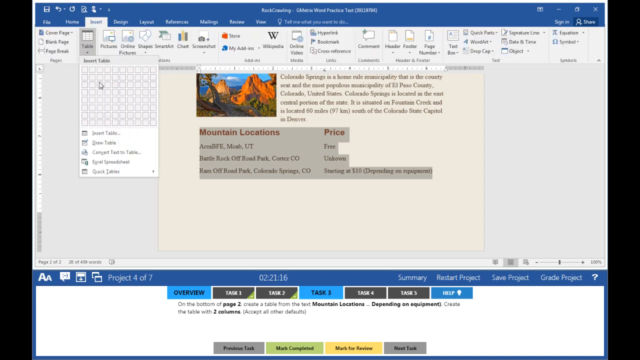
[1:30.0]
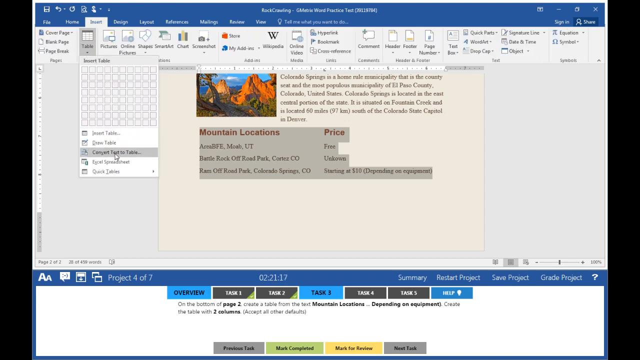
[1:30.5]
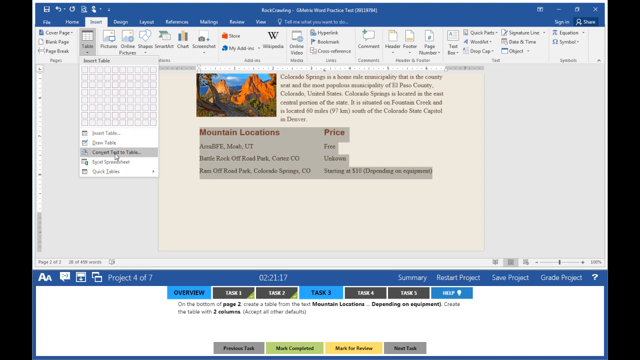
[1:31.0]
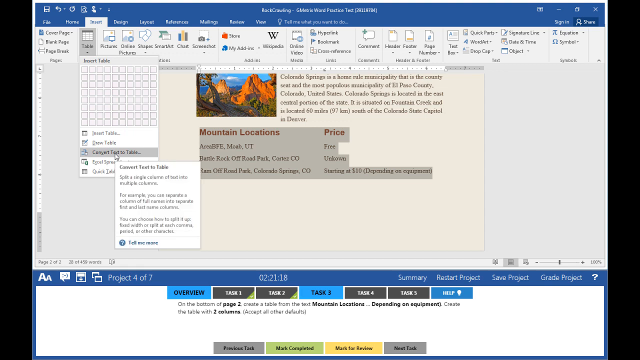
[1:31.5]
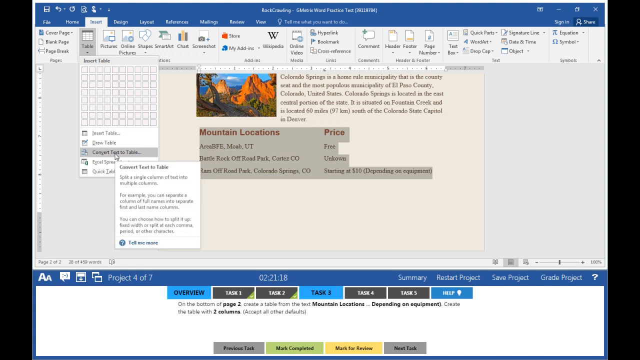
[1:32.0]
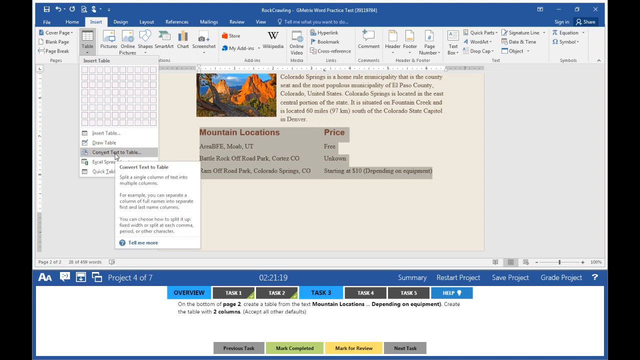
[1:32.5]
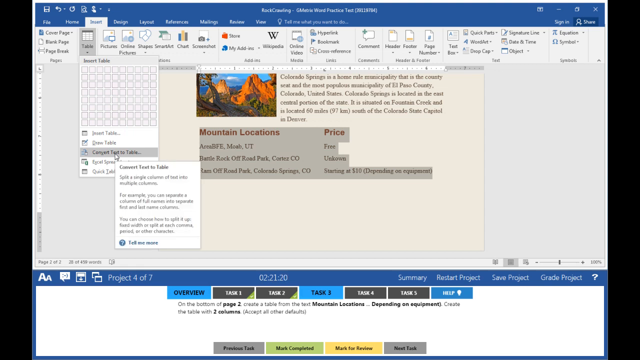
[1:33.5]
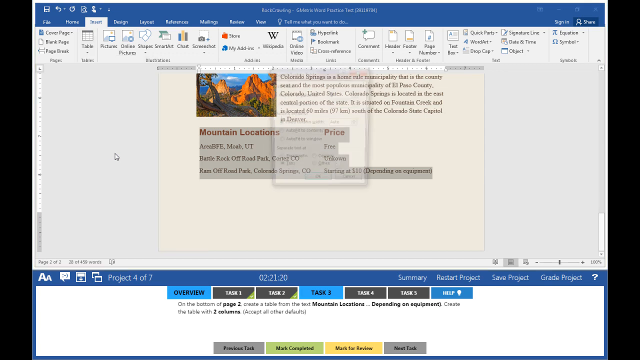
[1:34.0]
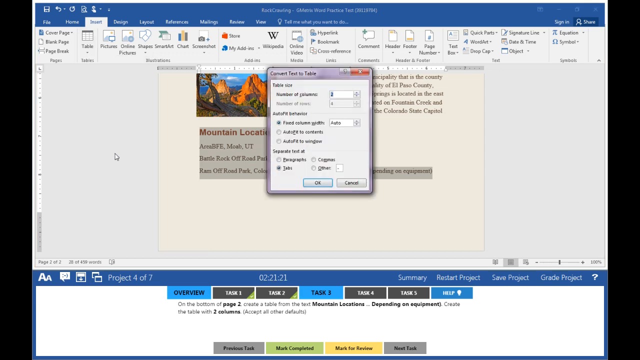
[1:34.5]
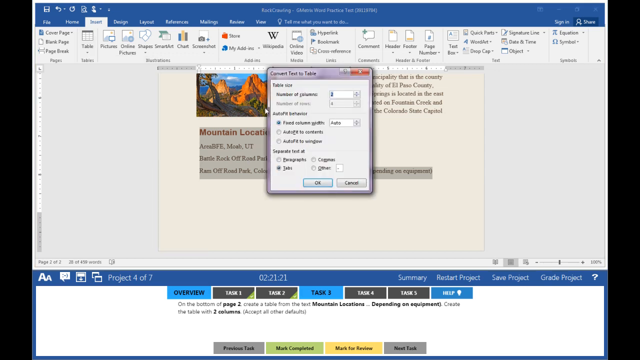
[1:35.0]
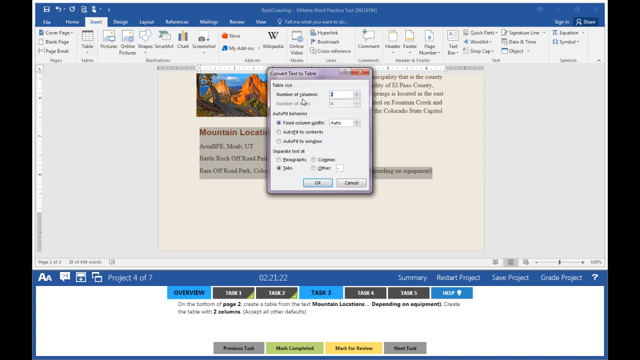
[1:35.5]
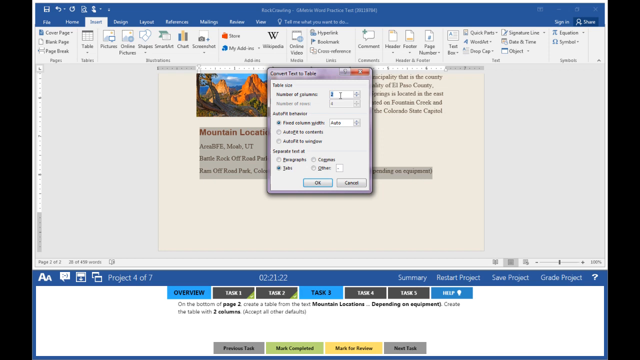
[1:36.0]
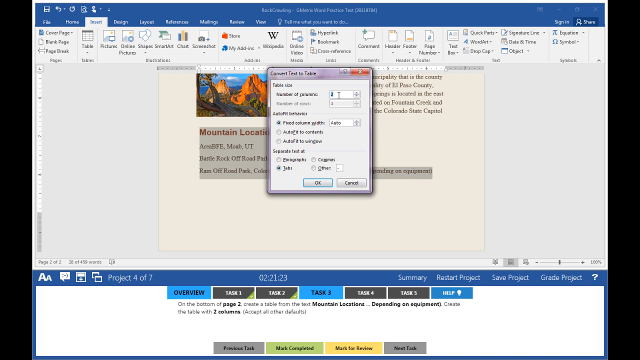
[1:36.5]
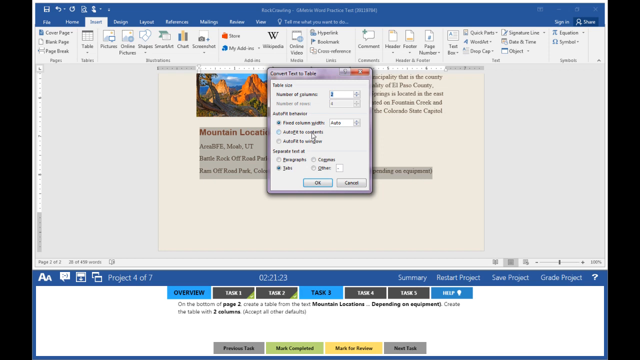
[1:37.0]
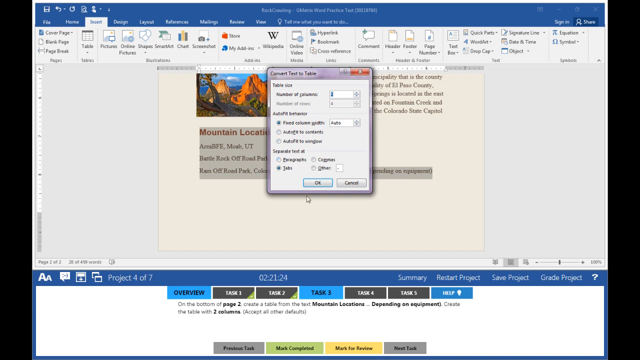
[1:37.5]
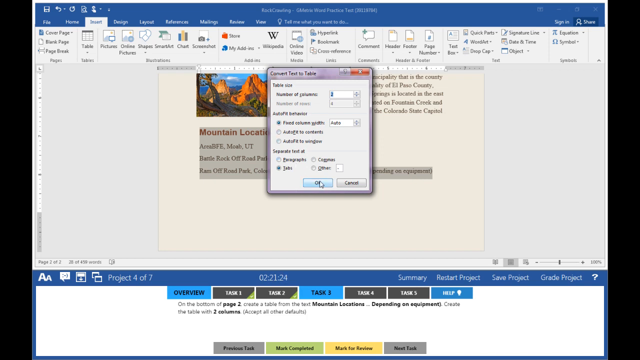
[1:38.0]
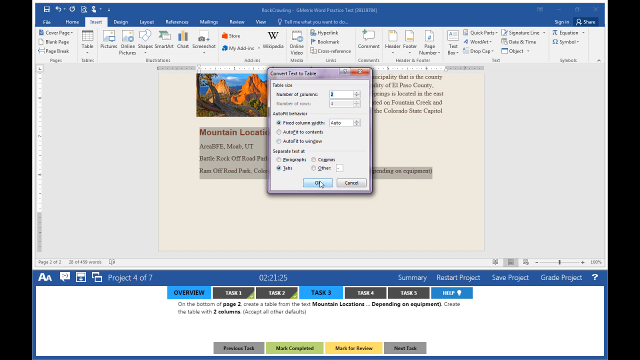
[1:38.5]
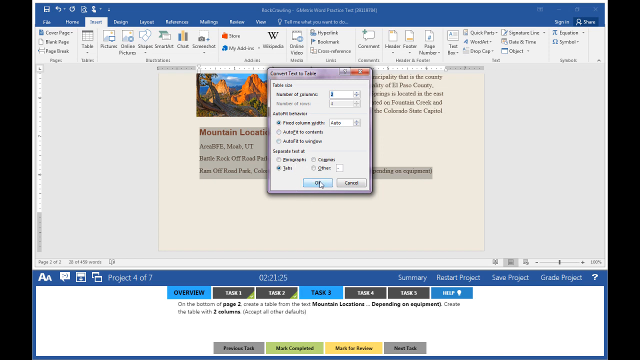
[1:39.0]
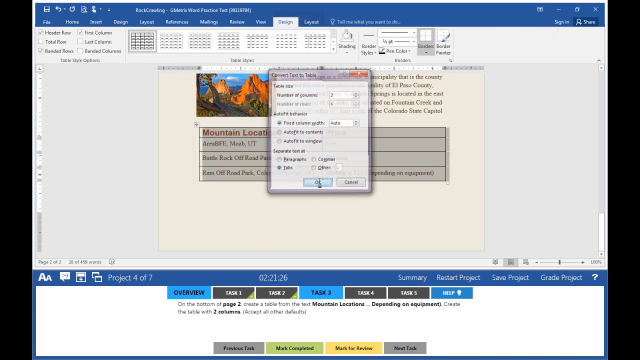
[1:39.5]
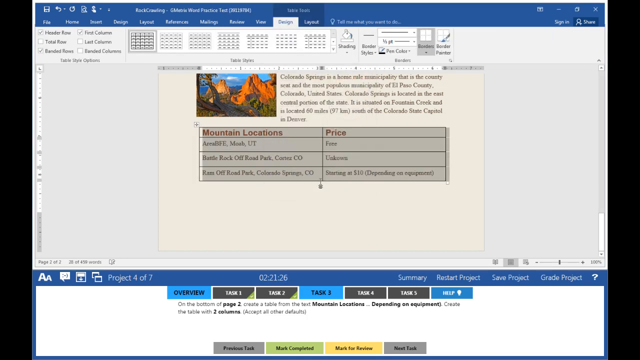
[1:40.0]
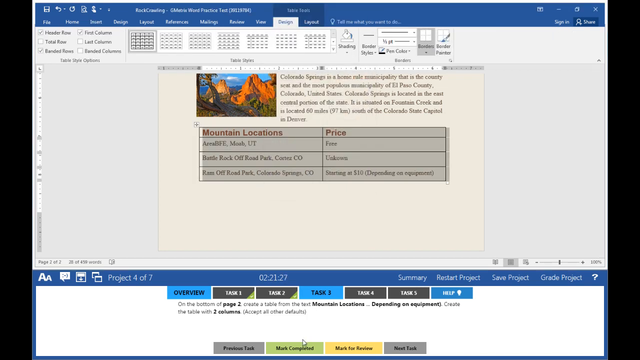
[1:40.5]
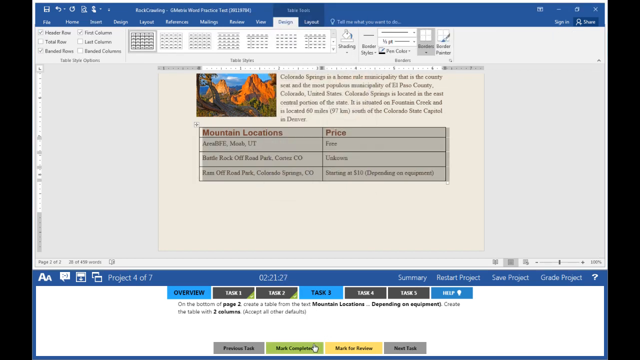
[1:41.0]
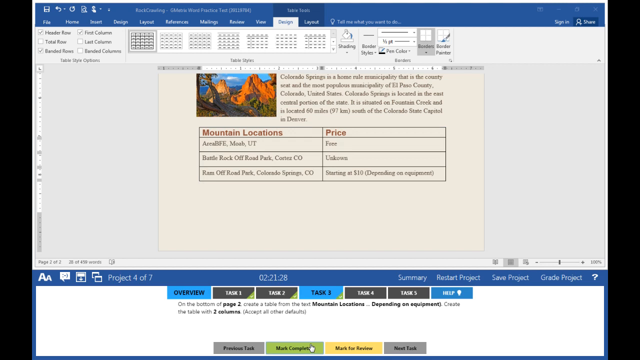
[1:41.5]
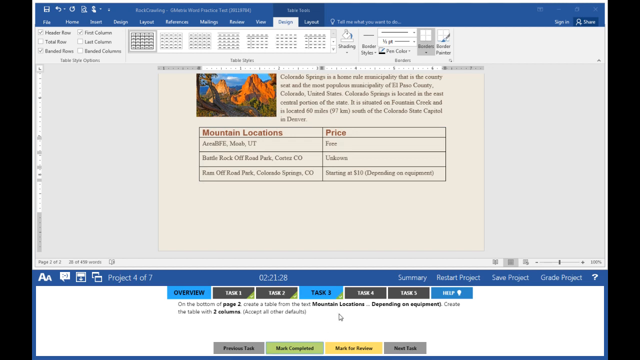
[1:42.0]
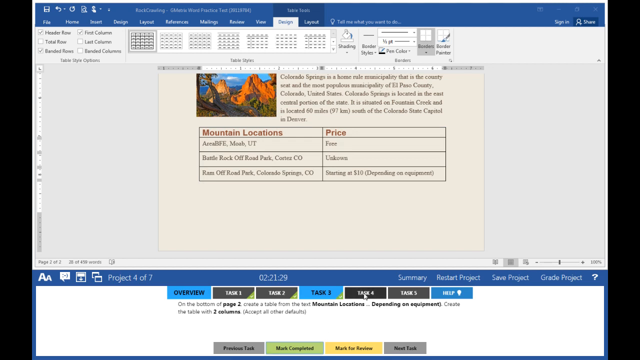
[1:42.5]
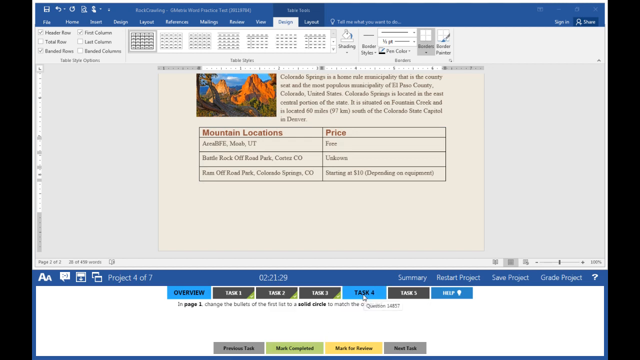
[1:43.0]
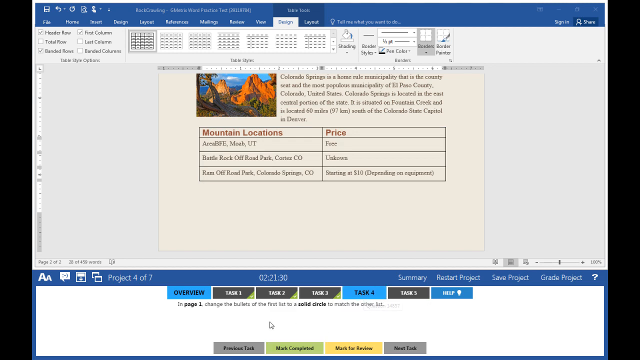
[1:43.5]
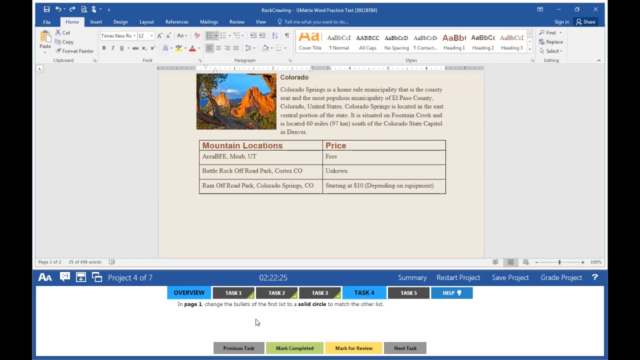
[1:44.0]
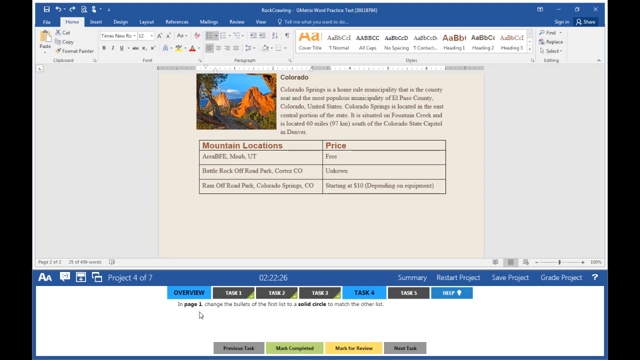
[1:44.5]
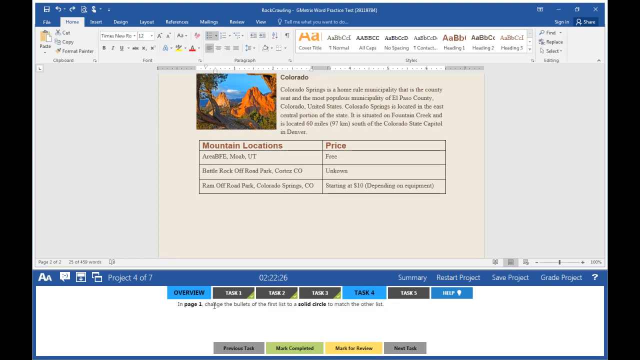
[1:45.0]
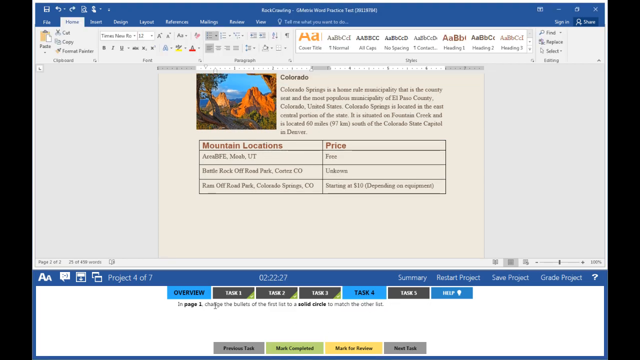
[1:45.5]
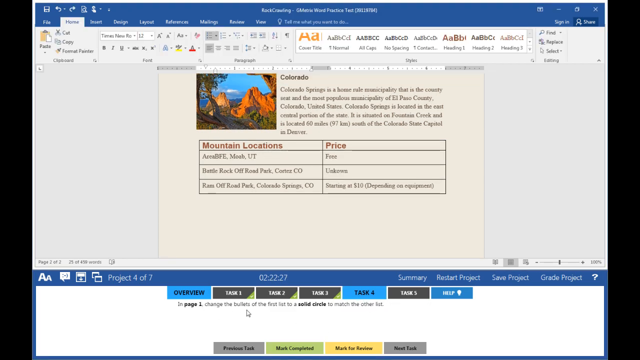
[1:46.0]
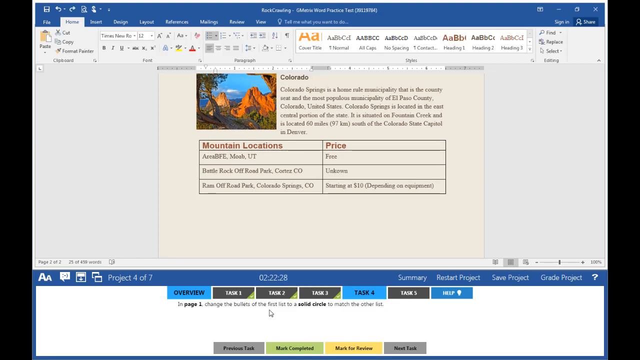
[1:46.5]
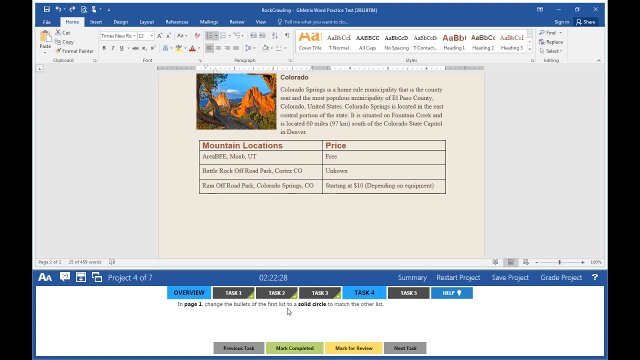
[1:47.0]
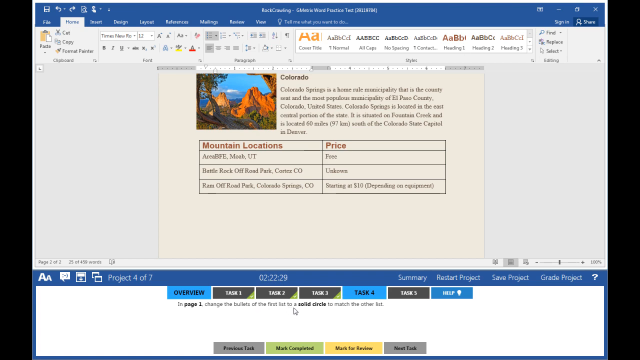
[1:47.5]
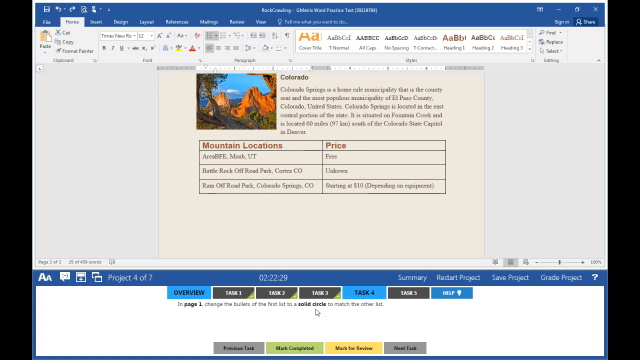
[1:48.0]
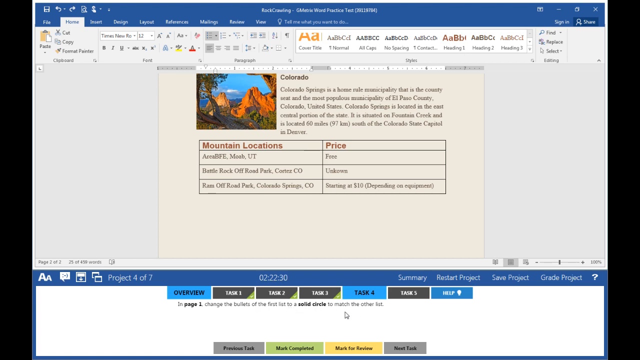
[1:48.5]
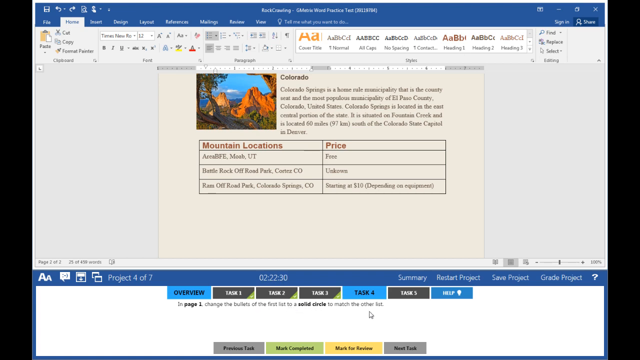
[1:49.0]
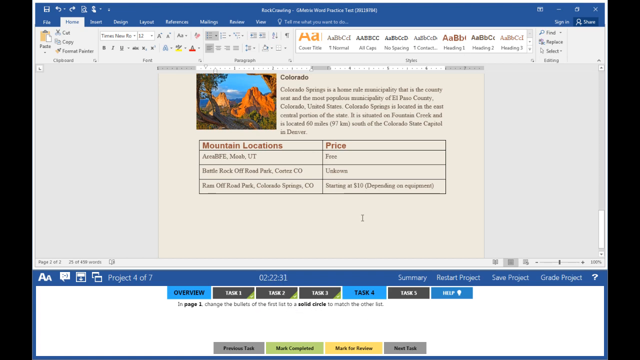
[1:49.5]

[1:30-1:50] In the Word document, the person has highlighted some mountain locations and is inserting this information into a table. They click on convert text to table, set how many columns, and click OK, but the result is not shown on the document. The bottom instruction said to create a table on page two, and the information goes into a table at the bottom of the original document rather than a new one, though the finished table is never shown. They then click on task four.